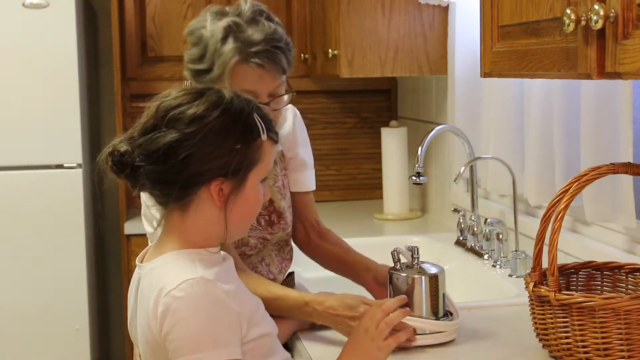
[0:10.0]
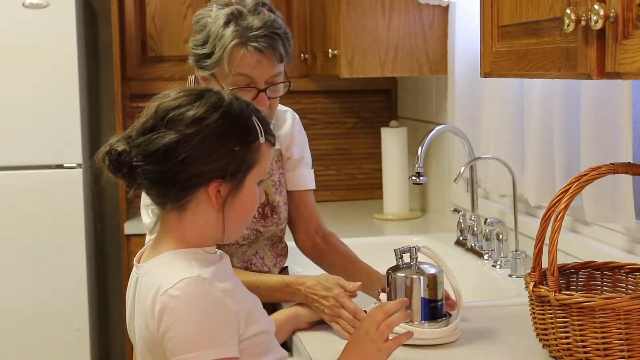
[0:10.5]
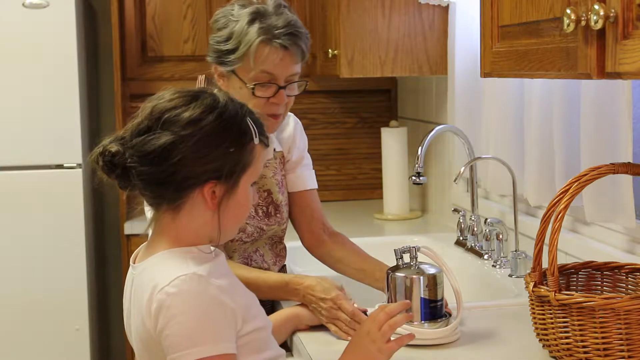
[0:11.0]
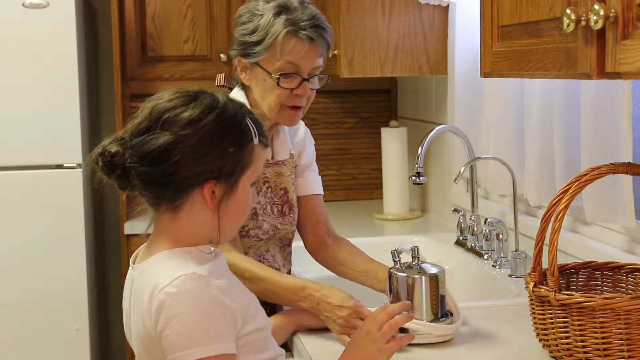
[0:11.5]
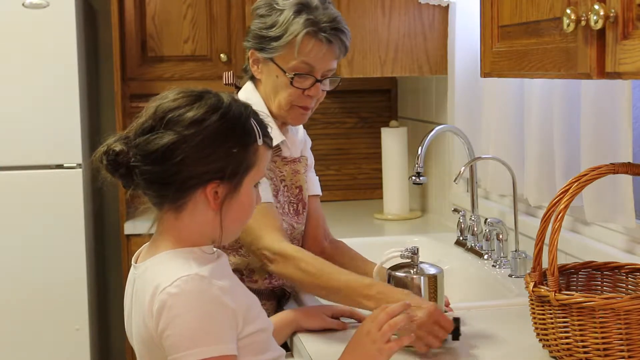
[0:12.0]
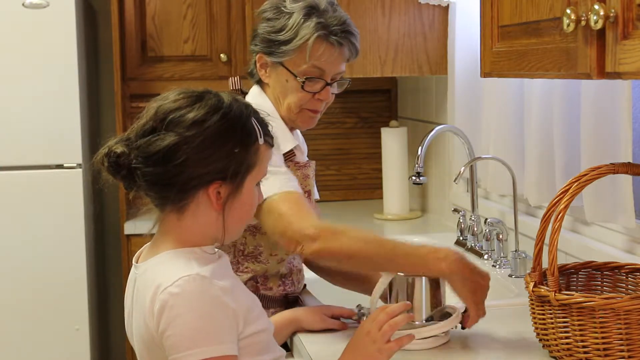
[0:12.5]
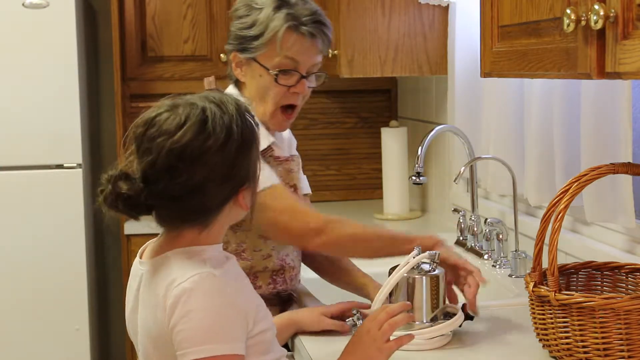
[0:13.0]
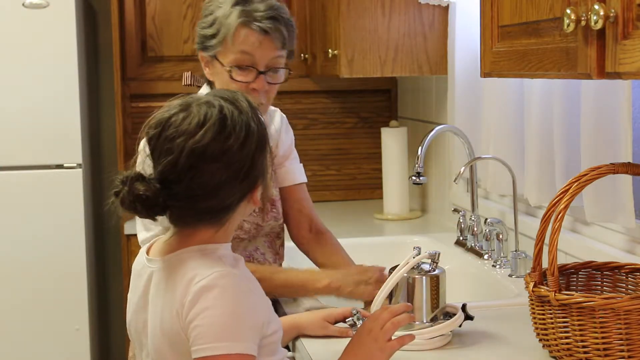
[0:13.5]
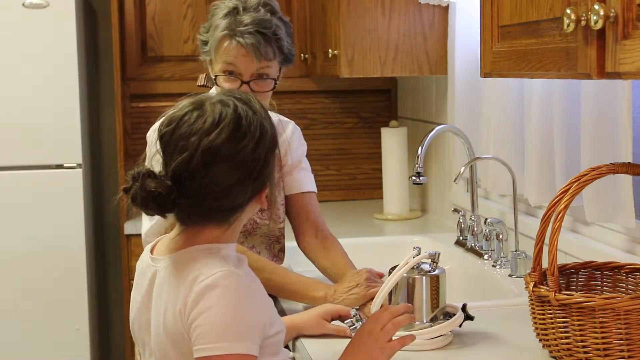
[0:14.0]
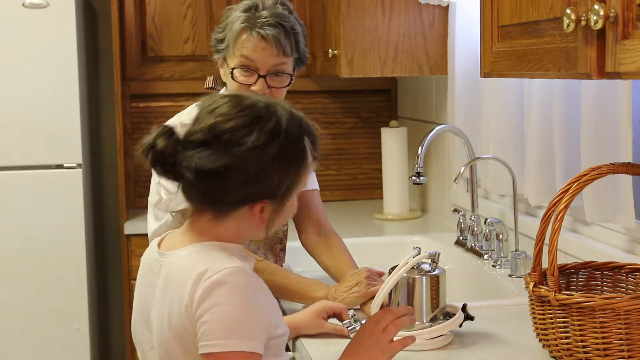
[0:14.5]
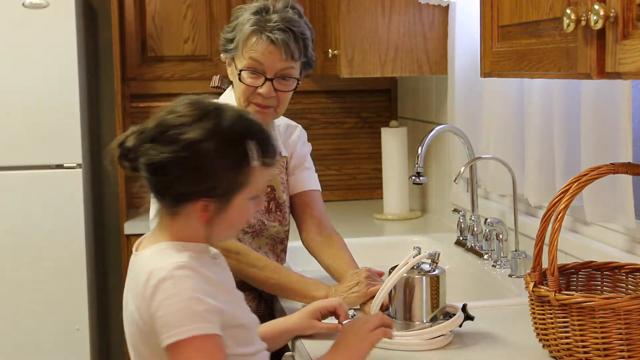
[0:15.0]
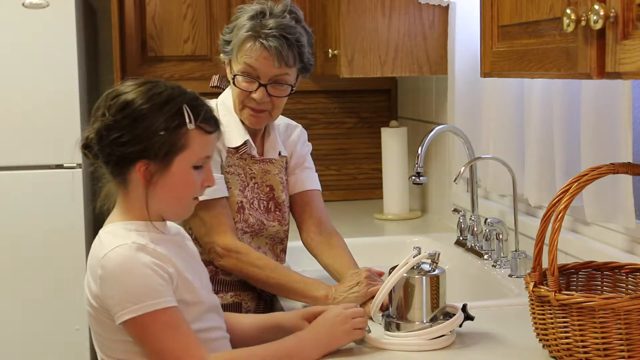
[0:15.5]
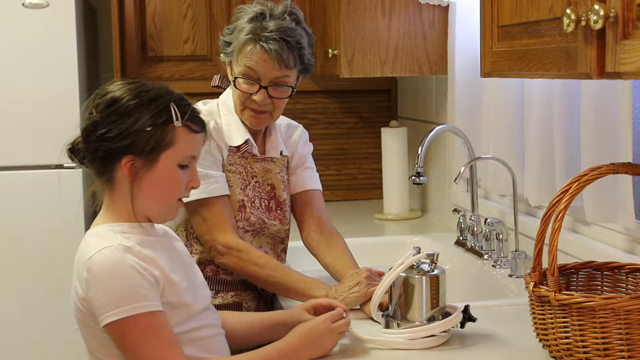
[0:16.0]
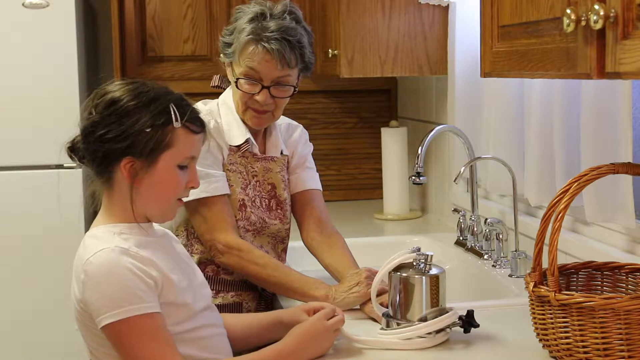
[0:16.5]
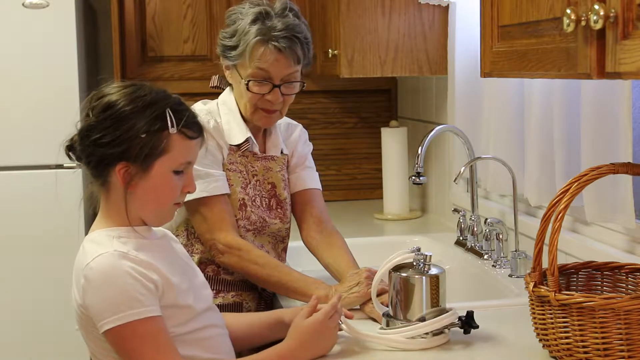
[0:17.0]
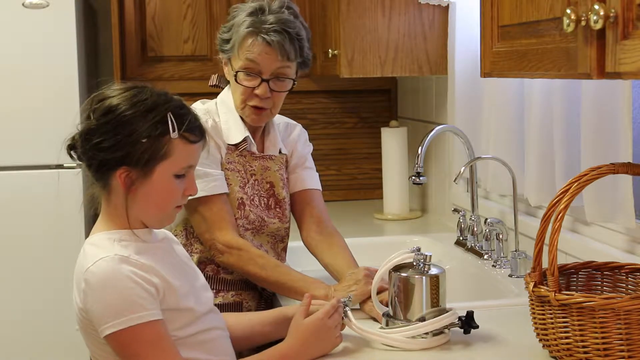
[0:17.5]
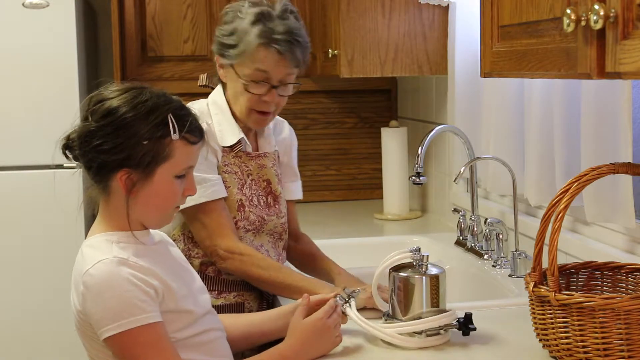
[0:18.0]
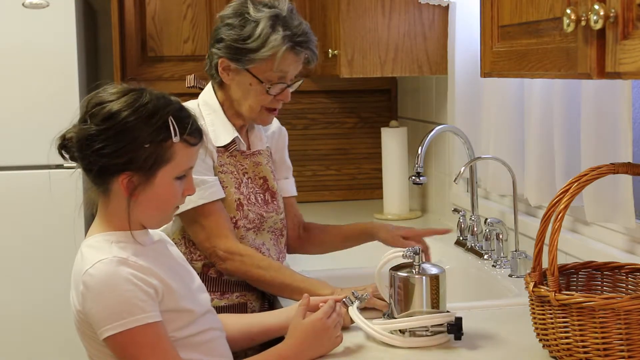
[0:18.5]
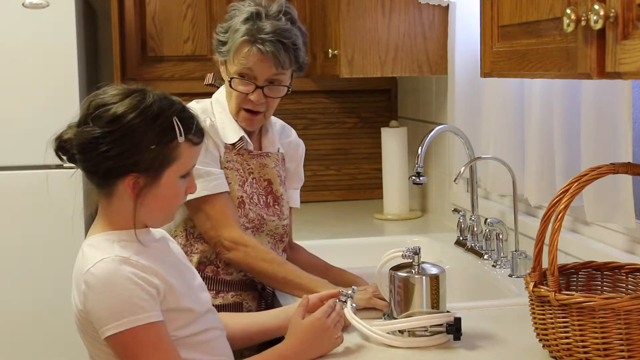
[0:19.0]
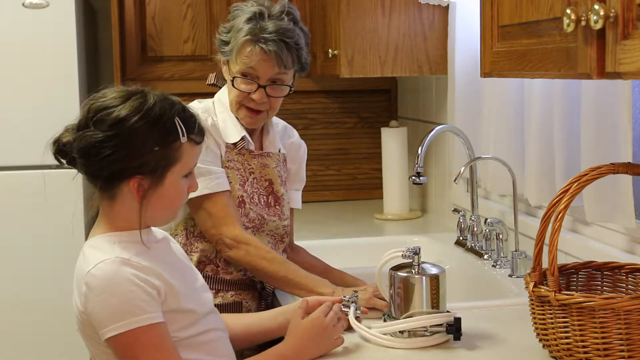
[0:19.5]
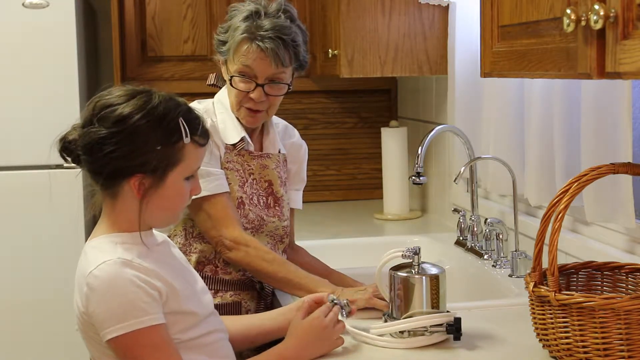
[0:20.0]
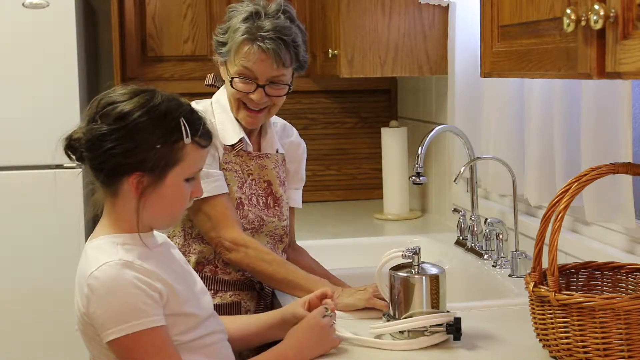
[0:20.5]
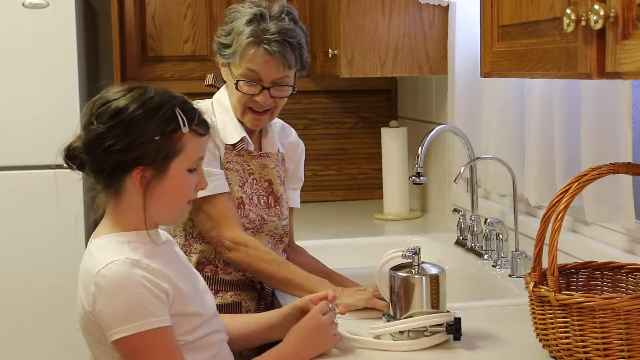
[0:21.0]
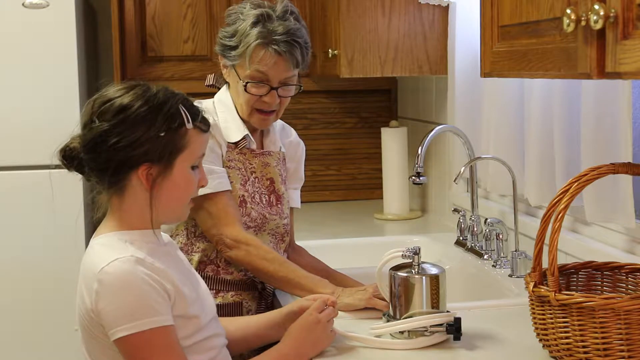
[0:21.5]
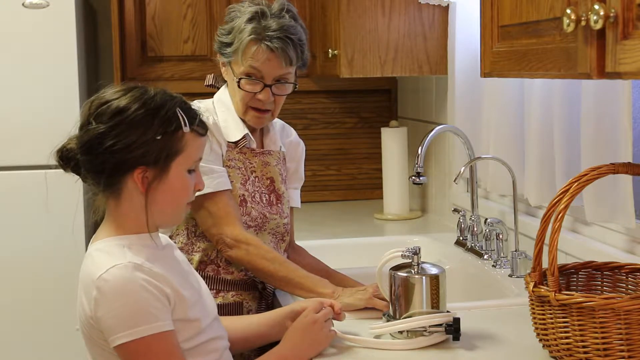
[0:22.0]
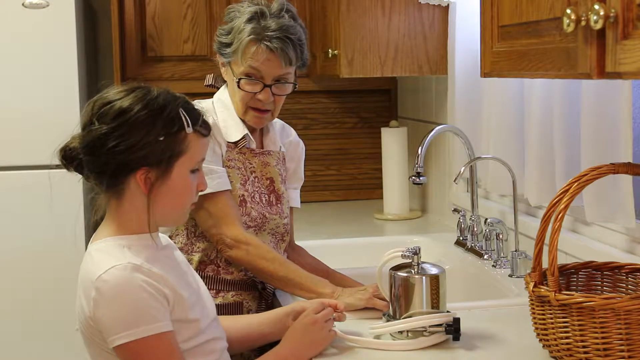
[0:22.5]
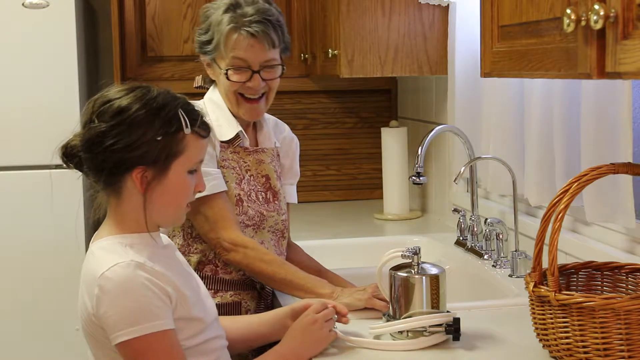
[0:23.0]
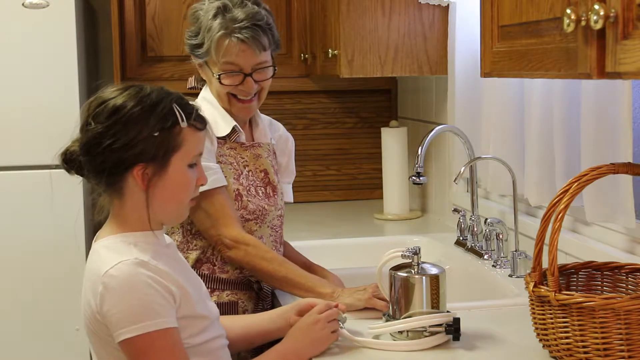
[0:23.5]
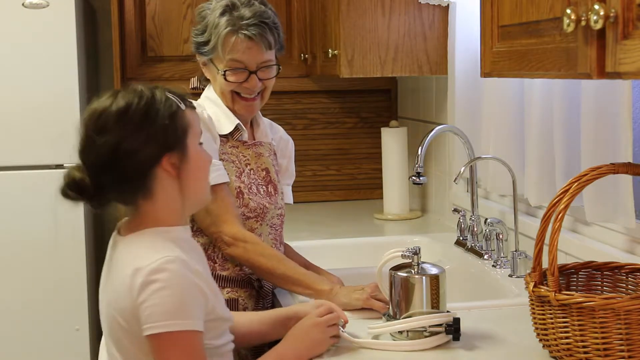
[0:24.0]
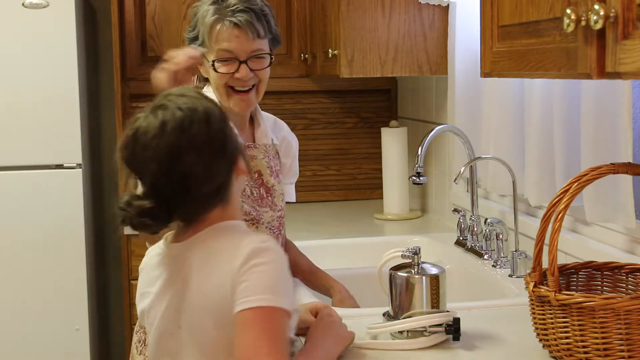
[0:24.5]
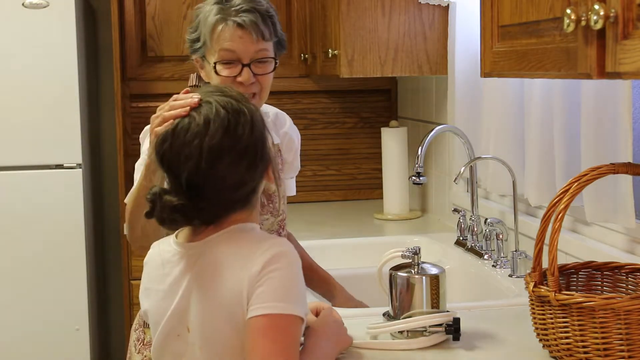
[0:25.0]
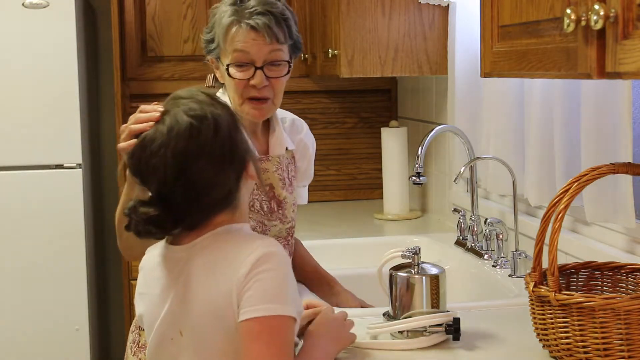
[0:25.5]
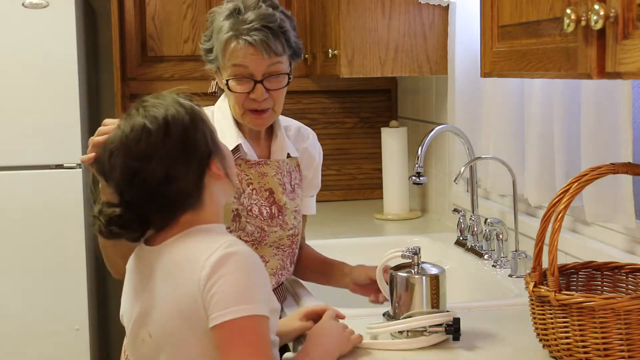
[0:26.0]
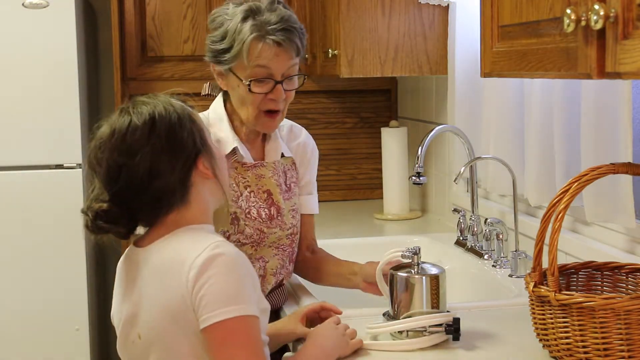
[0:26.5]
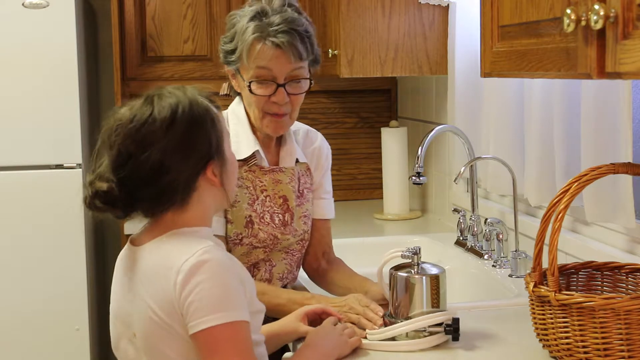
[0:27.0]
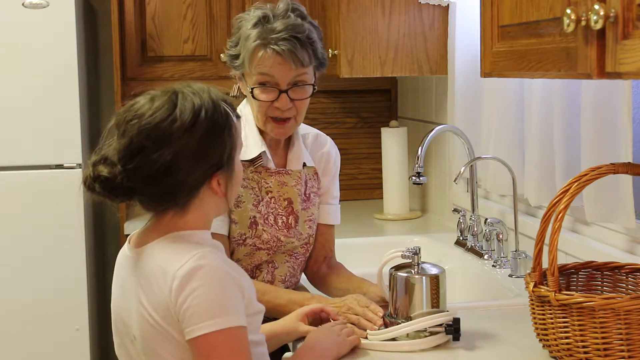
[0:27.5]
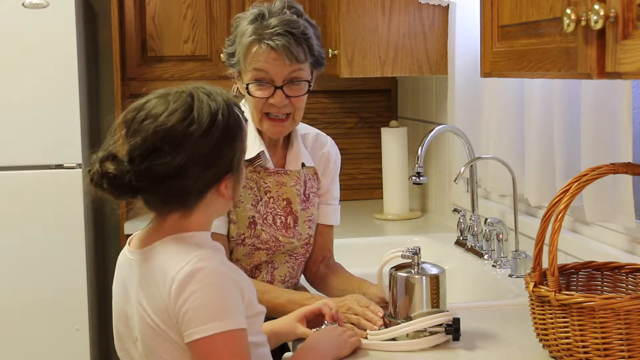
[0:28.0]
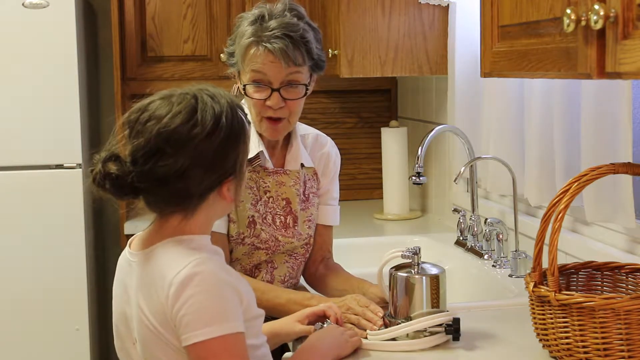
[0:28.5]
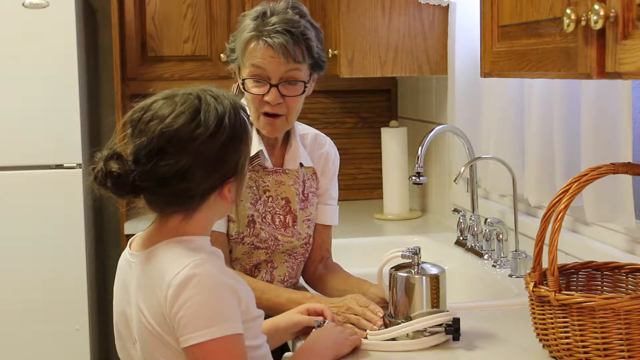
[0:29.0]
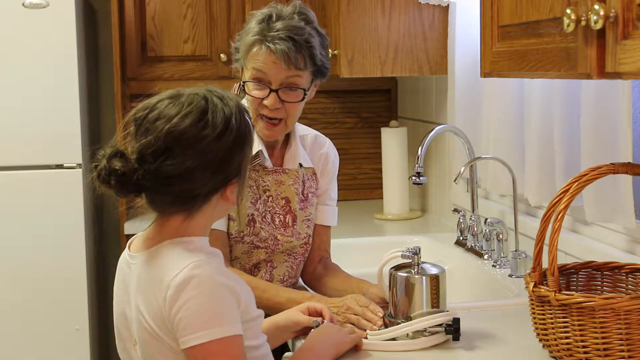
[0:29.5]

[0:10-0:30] The same older woman is now in view together with a young girl, possibly her granddaughter, daughter, or a family friend; how the girl is related to her is unclear. The woman appears to be trying to teach the girl something. She has some type of kitchen tool, possibly a piece of kitchen equipment, and uses both hands to spin it around while looking down at it. The girl looks up at the woman, possibly asking her questions, and the woman looks at the girl, seemingly answering. The girl looks at the device while holding a piece of it, as if trying to take in as much information as possible.